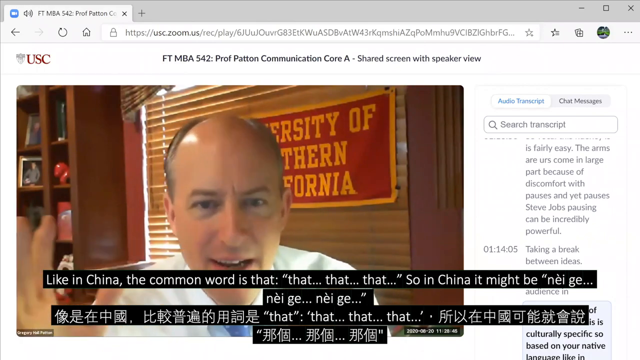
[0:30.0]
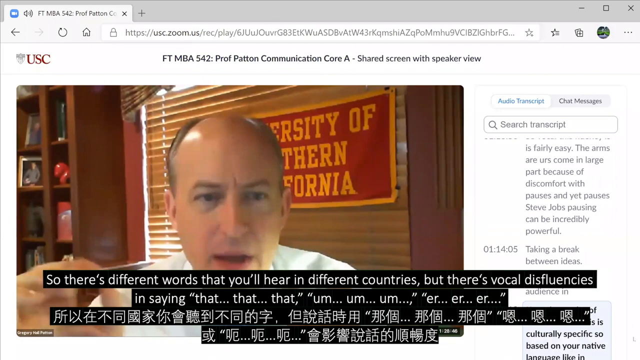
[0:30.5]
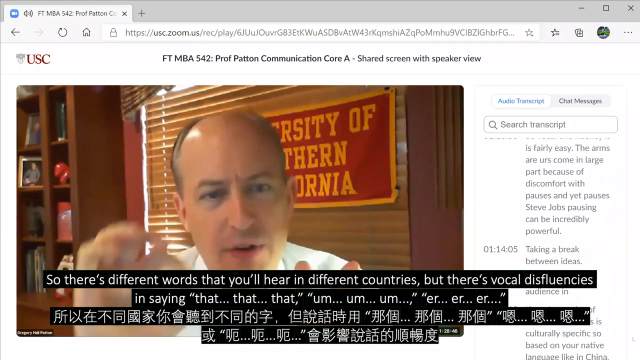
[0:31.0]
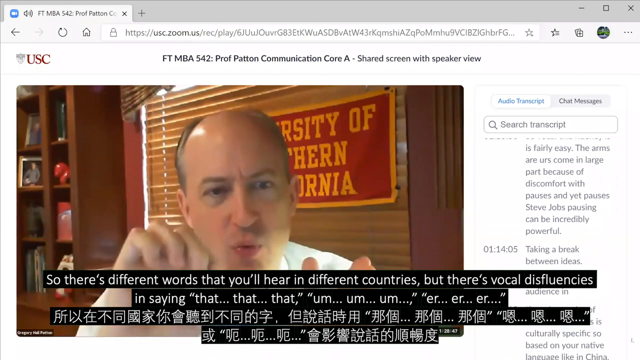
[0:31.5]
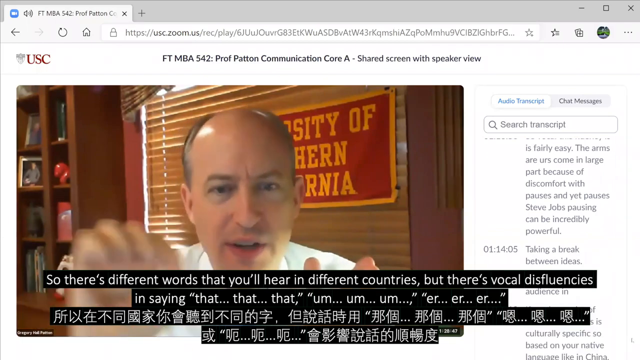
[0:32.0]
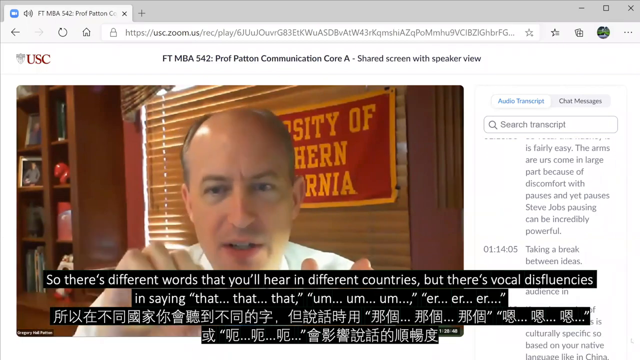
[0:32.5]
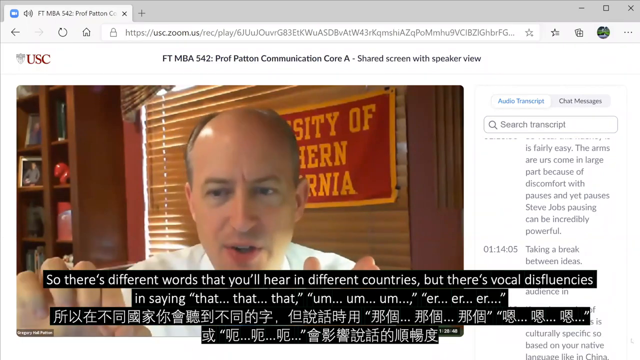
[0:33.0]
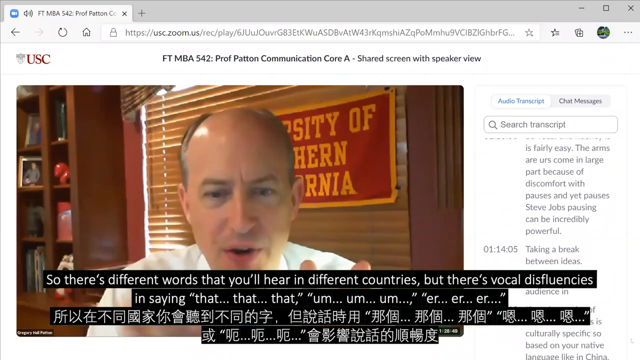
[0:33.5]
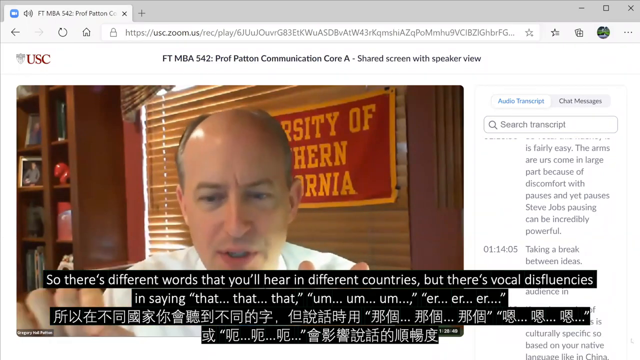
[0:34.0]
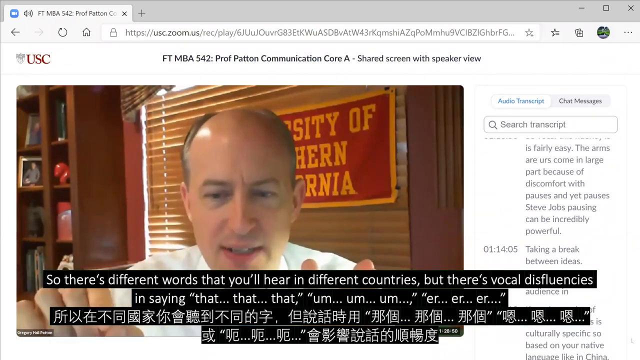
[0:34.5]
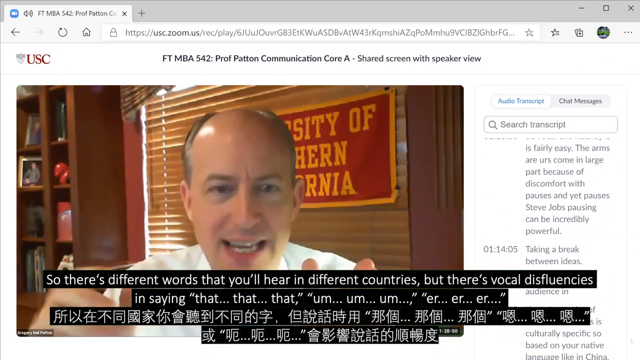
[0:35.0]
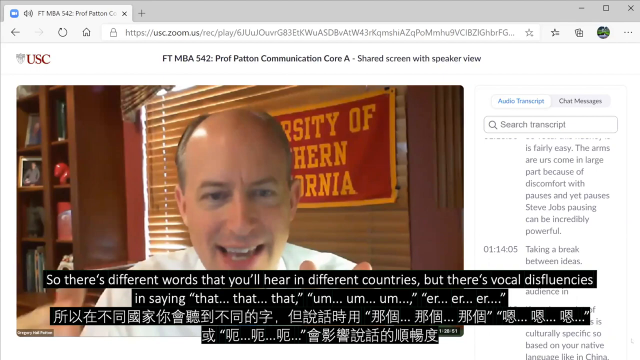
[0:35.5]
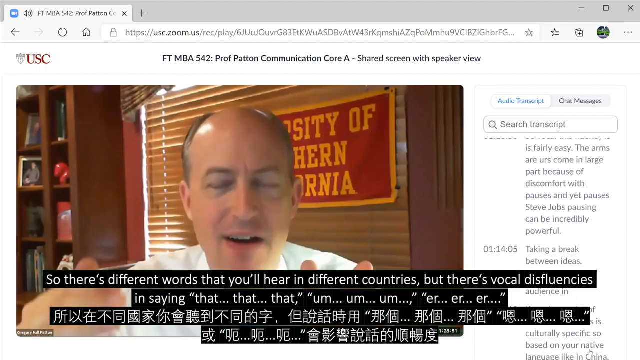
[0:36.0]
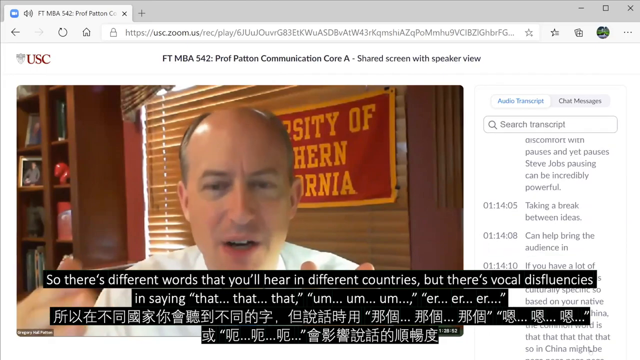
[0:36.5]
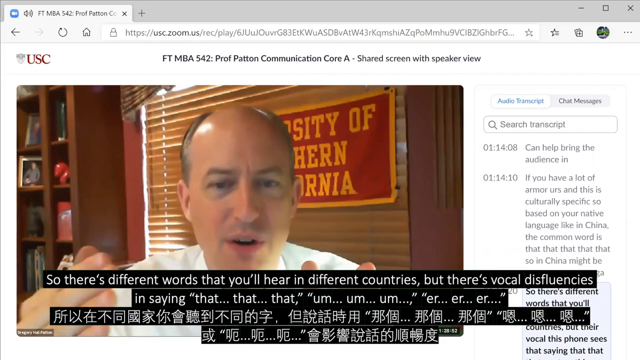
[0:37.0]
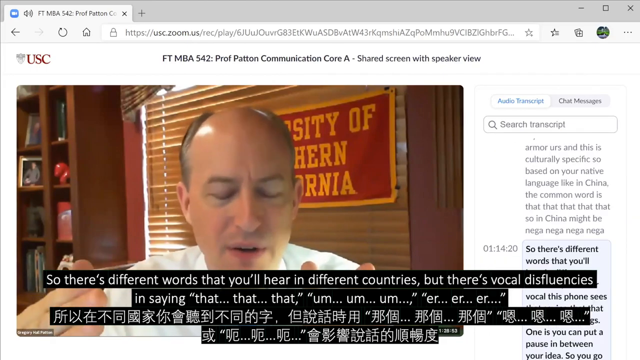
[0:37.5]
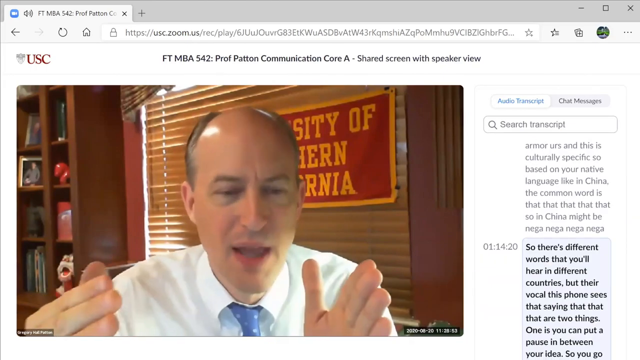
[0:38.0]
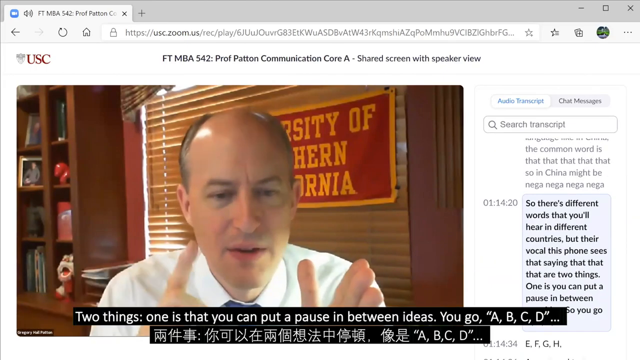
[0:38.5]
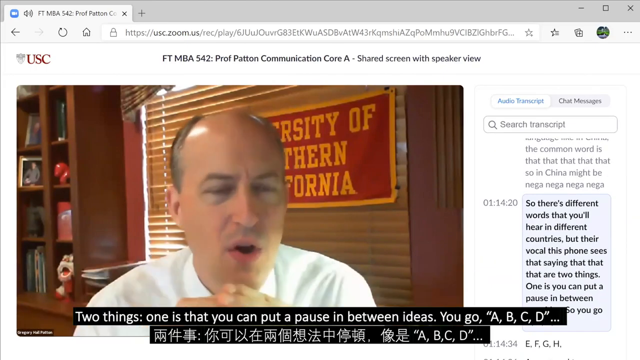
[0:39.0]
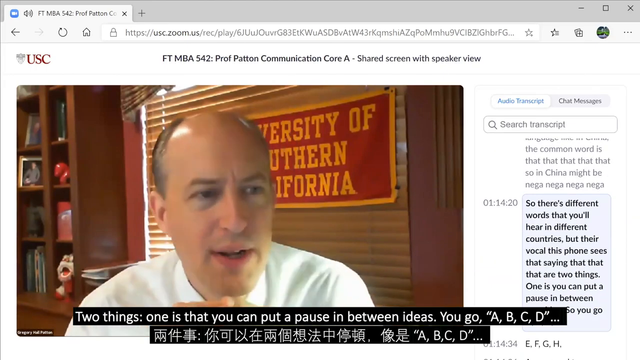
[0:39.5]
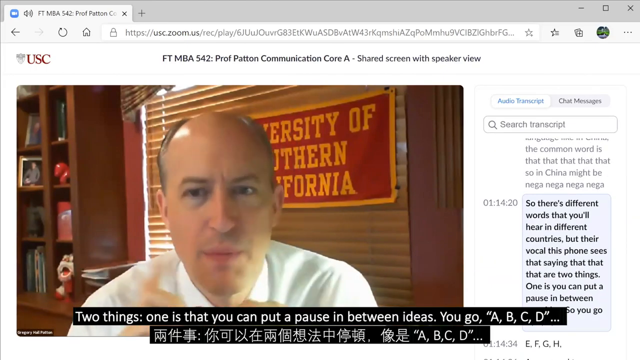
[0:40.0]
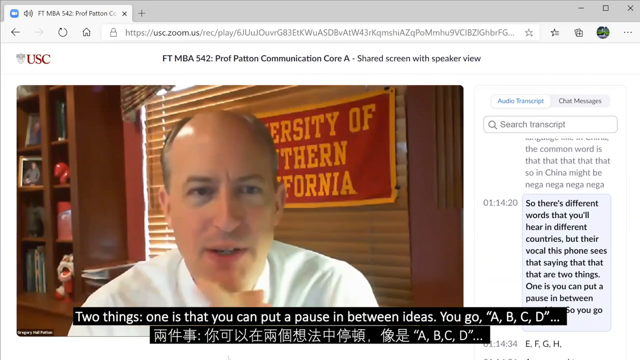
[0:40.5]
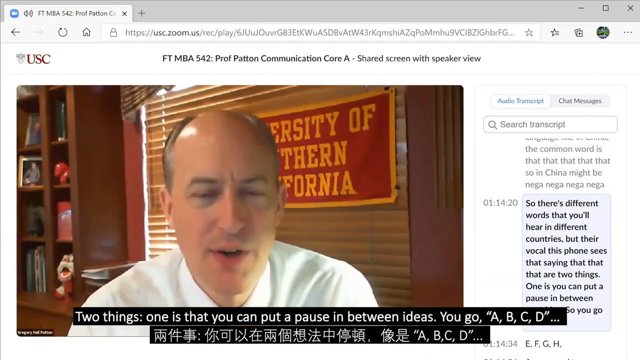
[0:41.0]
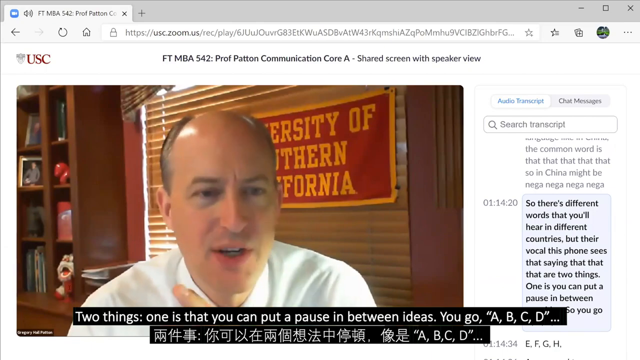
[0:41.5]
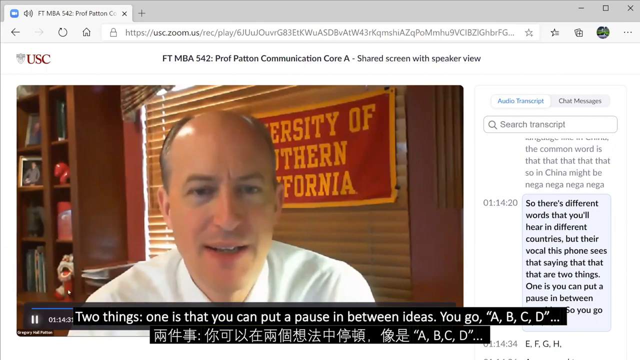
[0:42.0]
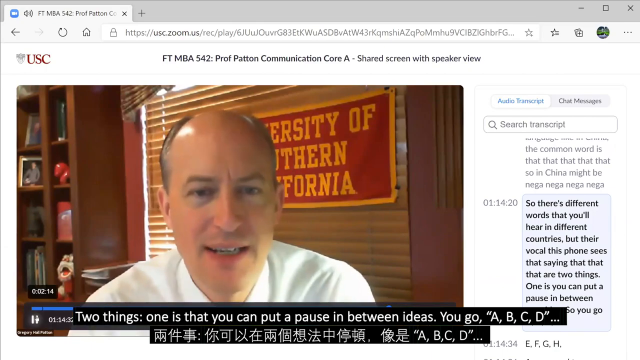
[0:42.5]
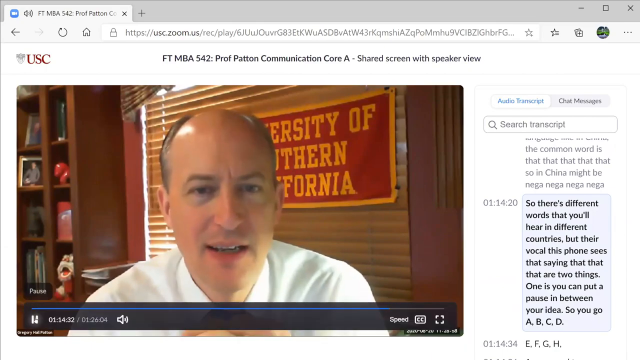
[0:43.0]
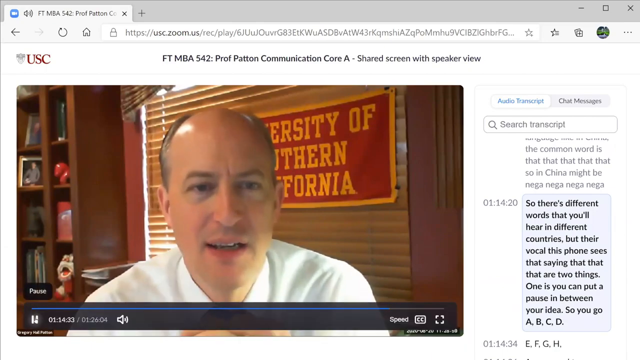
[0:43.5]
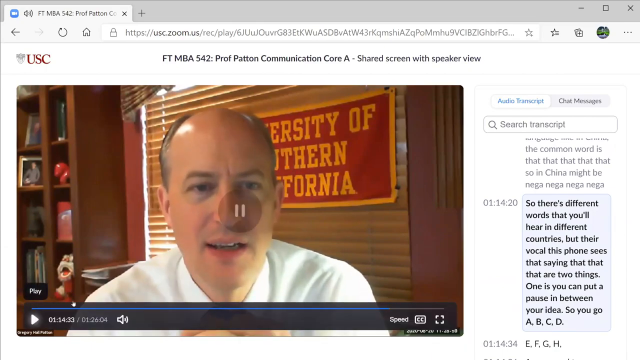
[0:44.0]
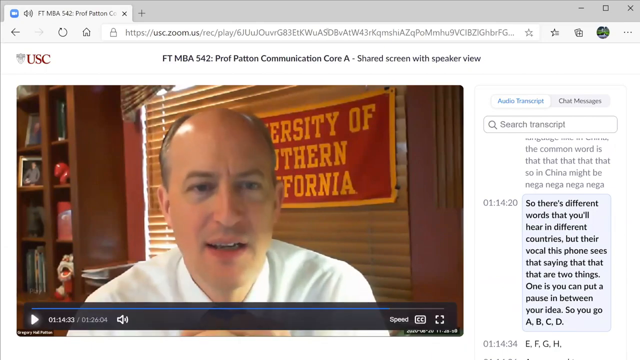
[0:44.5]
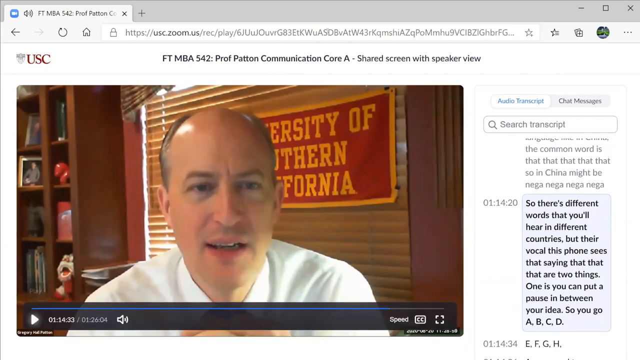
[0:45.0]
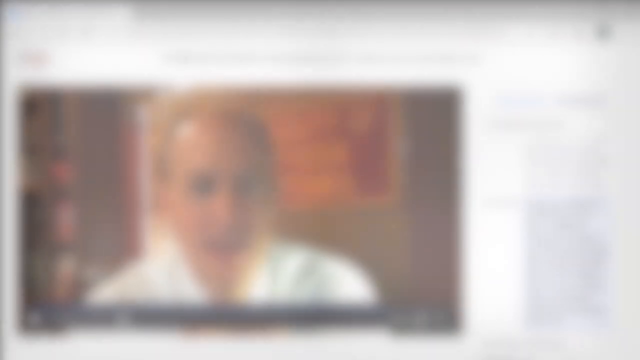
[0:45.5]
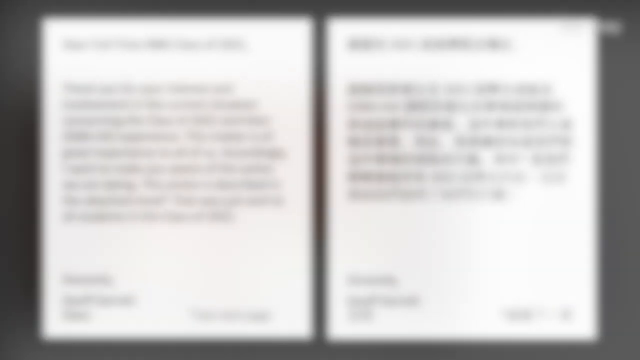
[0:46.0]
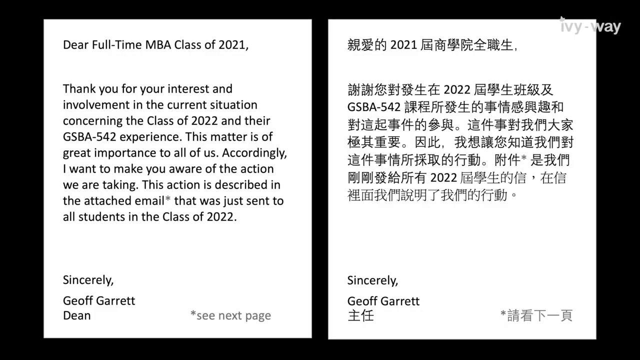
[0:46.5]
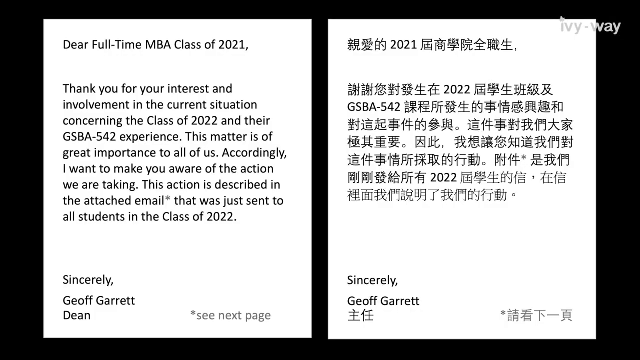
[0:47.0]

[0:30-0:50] A website page is shown on a computer screen, most of it taken up by a video screen. An older man in a white T-shirt with a balding hairstyle is talking on the screen to other people. He is sitting in an office in front of a window with a wooden blind, and behind him is a red flag with yellow writing that says "University of Southern California." The title at the top of the page reads "FTMBA 542, Professor Patton, Communication Core A, Shared Screen with Speaker View." As he speaks, his words appear in English at the bottom of the screen with a Chinese translation underneath. On the right-hand side of the screen is a transcript of the words spoken by the man and by the people answering and asking questions. In the top left-hand corner there is a small red icon with the letters "USC."